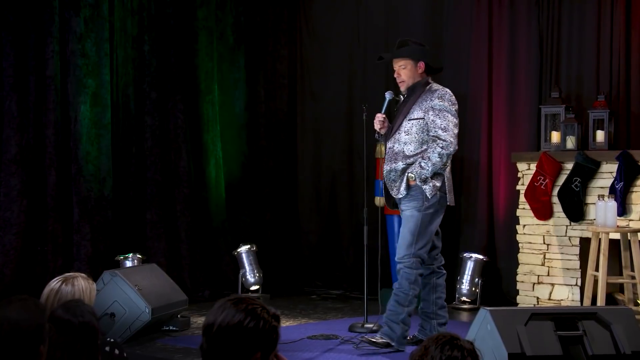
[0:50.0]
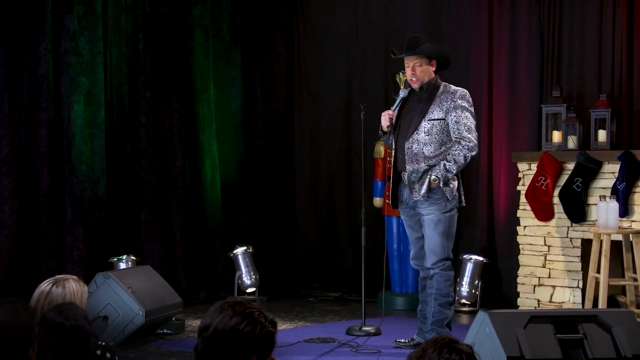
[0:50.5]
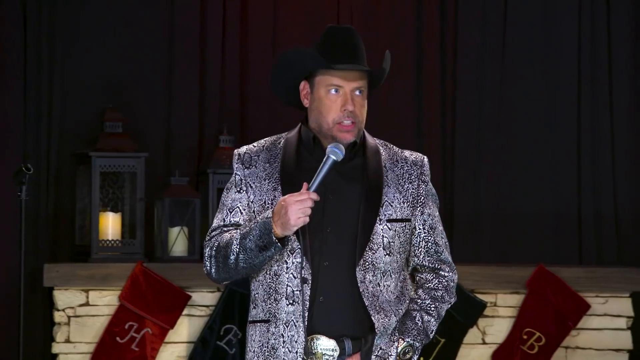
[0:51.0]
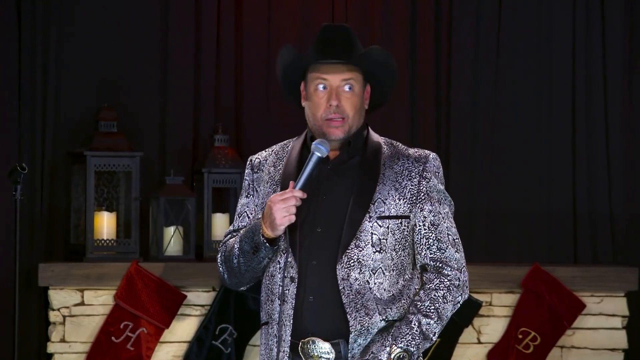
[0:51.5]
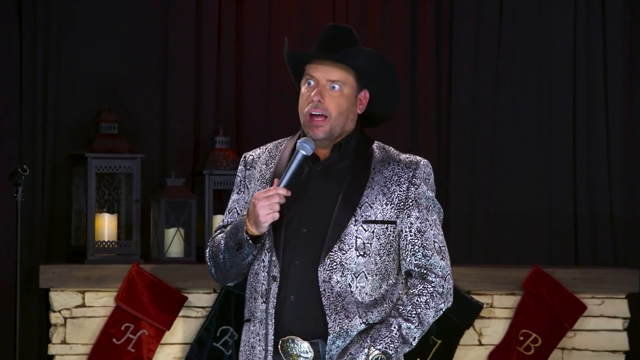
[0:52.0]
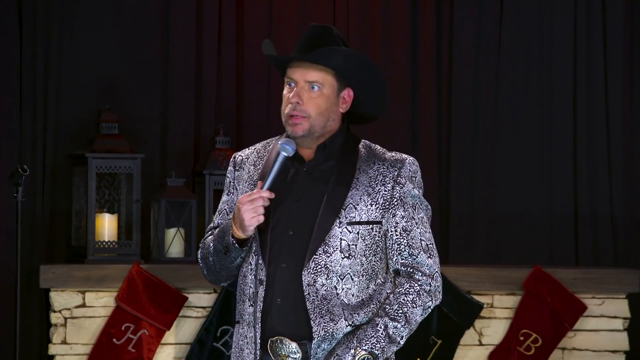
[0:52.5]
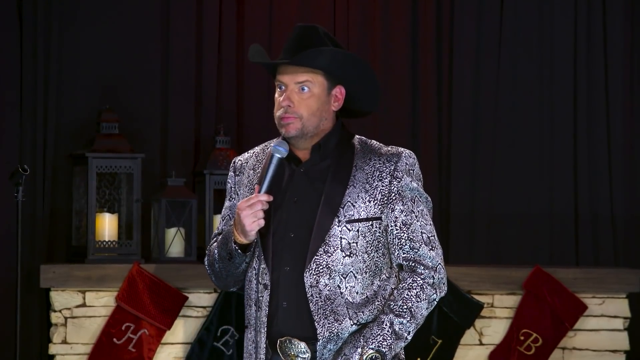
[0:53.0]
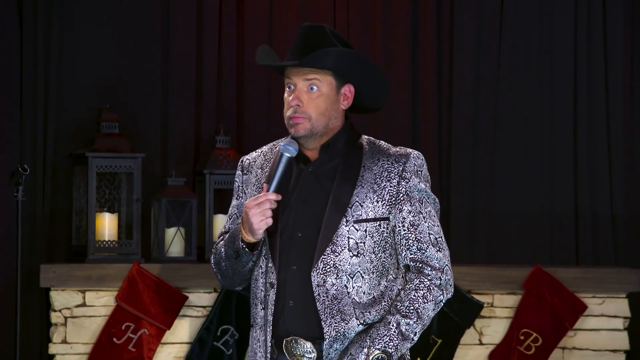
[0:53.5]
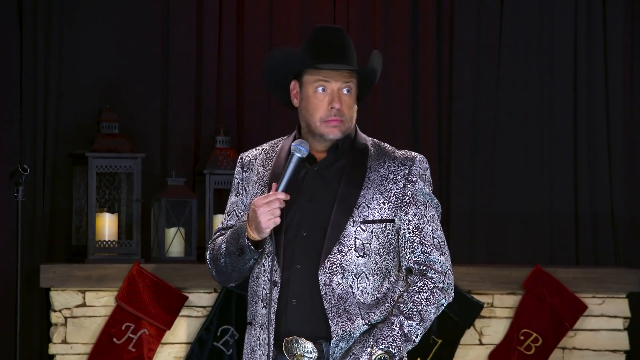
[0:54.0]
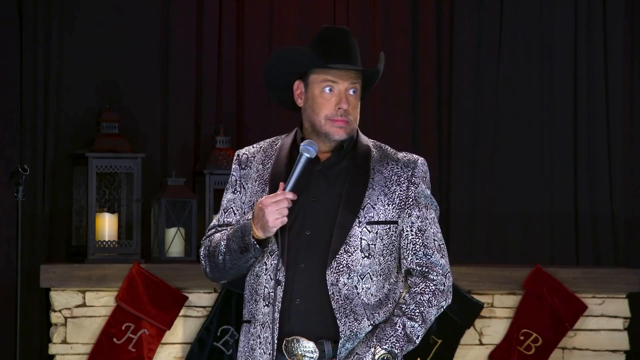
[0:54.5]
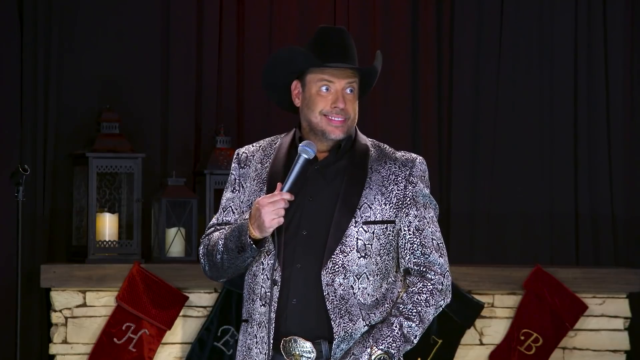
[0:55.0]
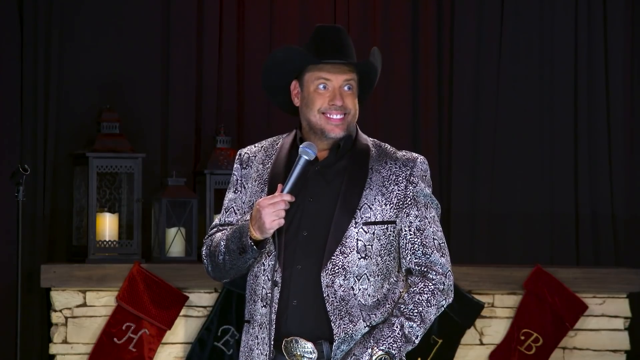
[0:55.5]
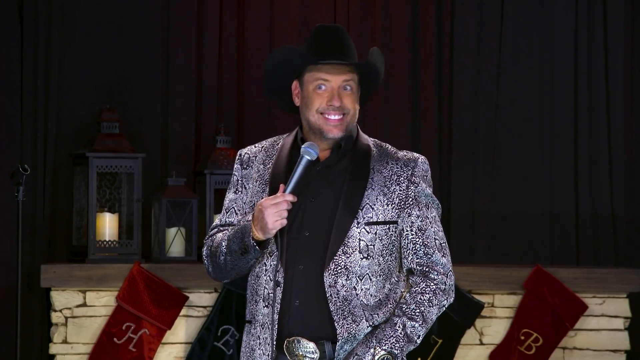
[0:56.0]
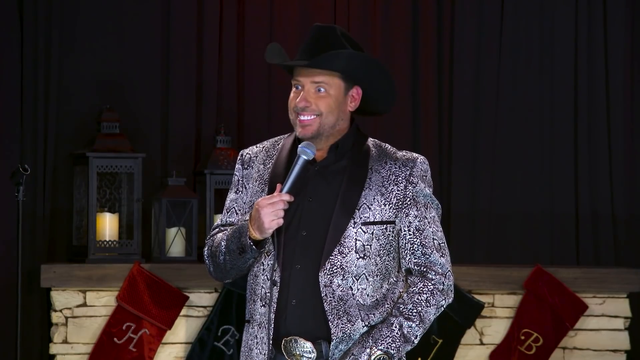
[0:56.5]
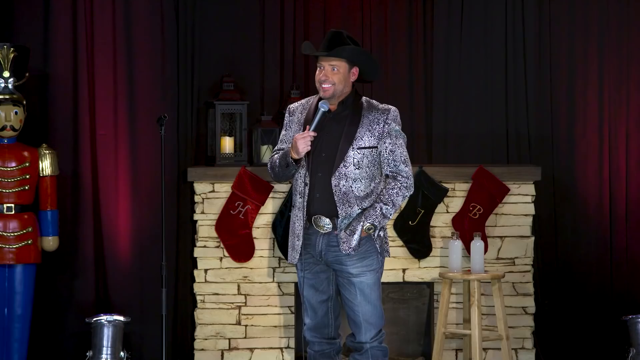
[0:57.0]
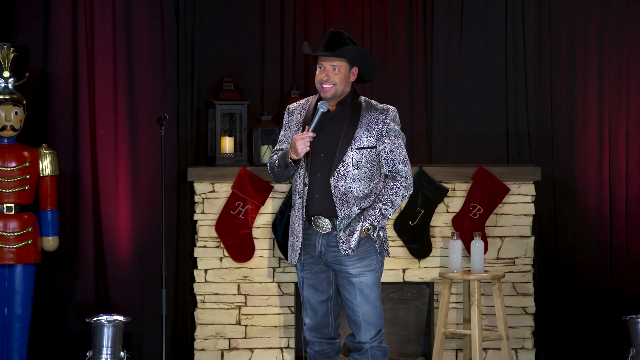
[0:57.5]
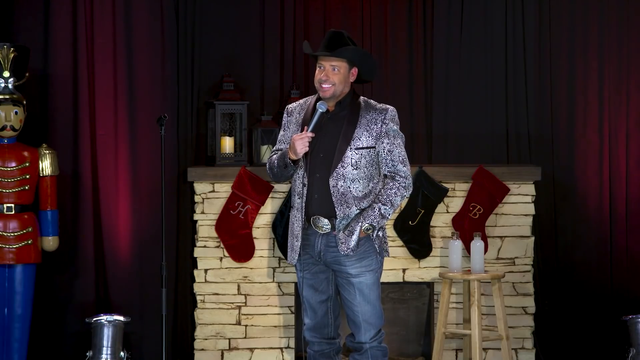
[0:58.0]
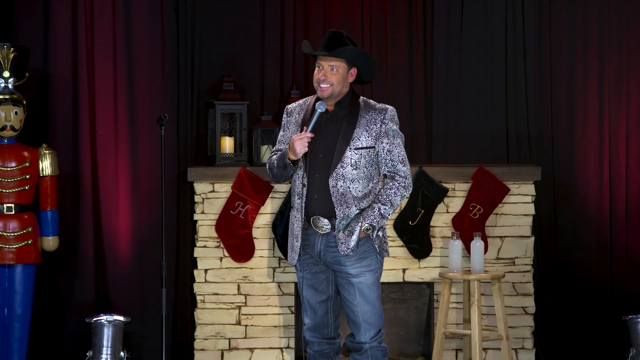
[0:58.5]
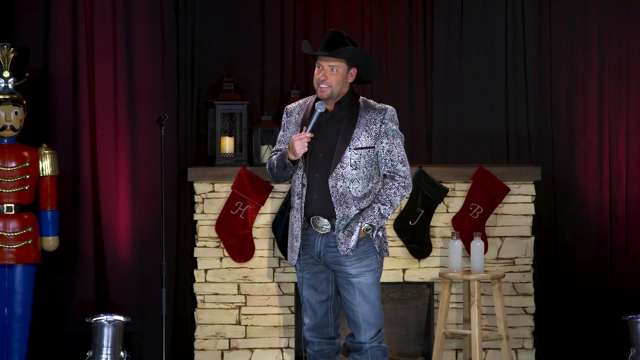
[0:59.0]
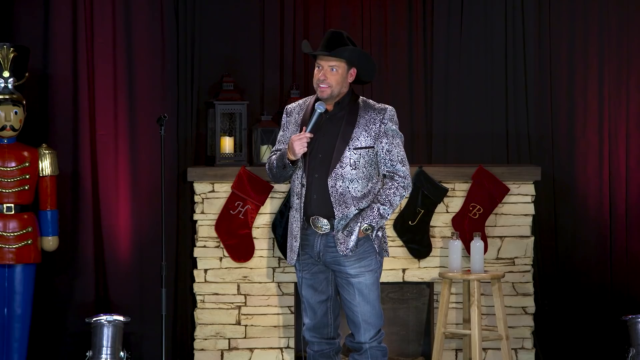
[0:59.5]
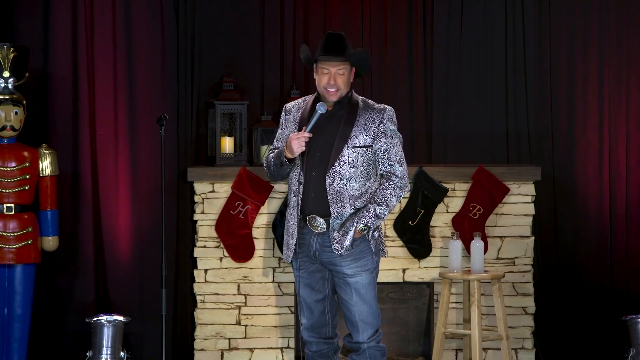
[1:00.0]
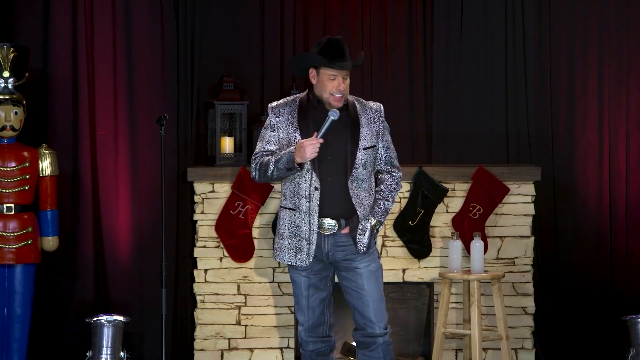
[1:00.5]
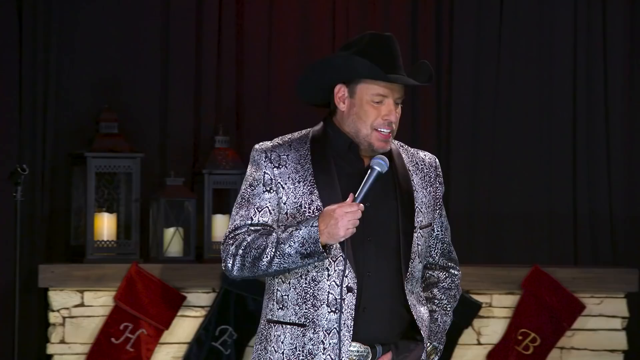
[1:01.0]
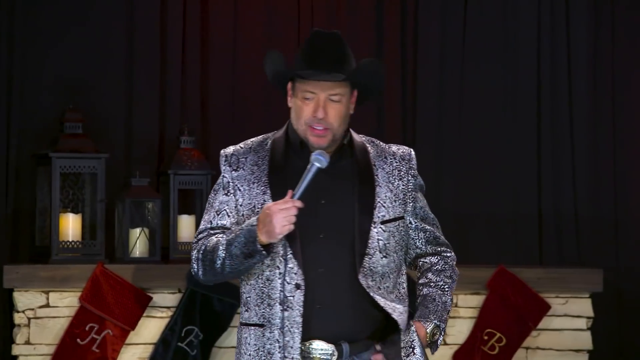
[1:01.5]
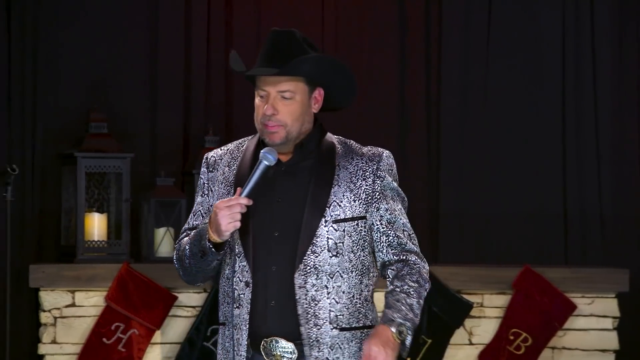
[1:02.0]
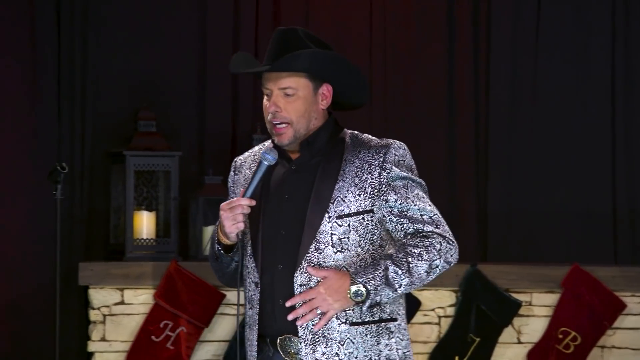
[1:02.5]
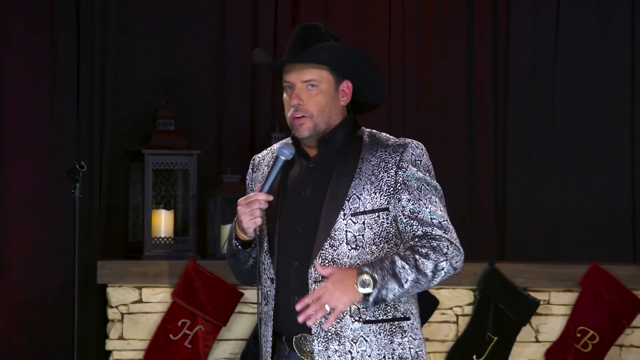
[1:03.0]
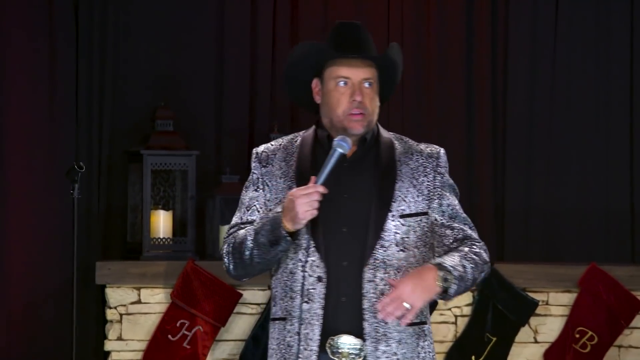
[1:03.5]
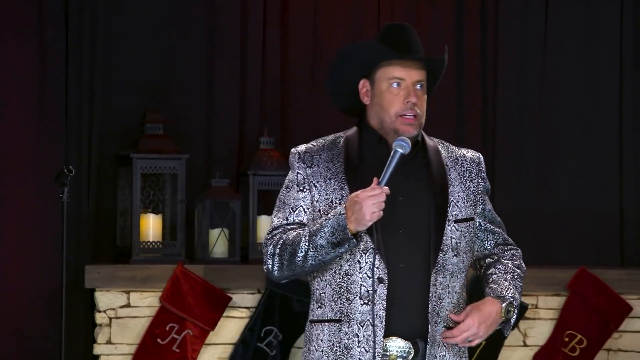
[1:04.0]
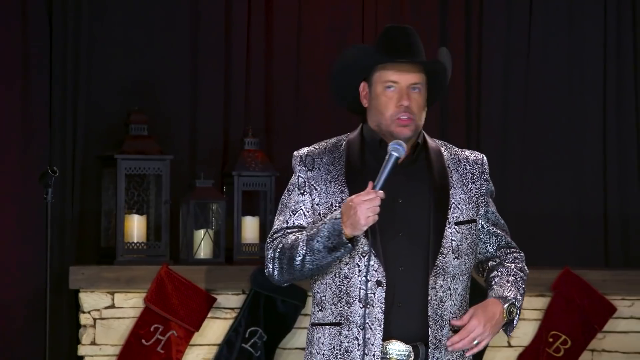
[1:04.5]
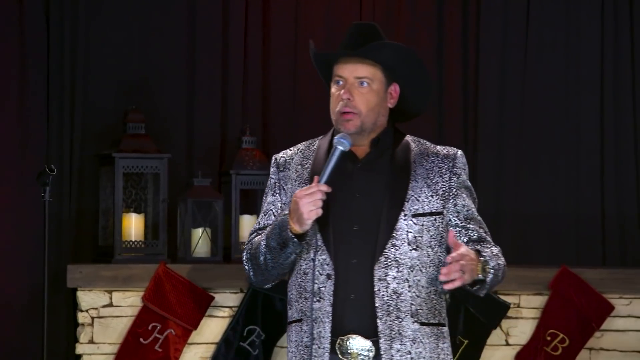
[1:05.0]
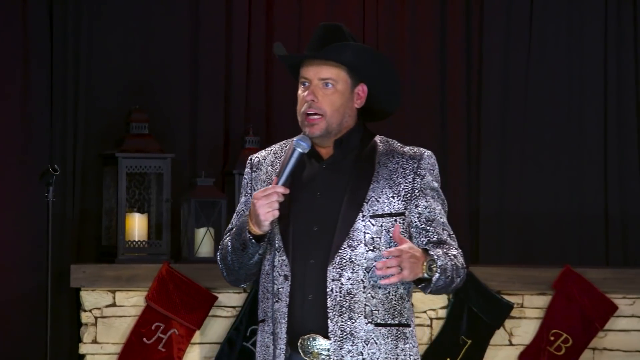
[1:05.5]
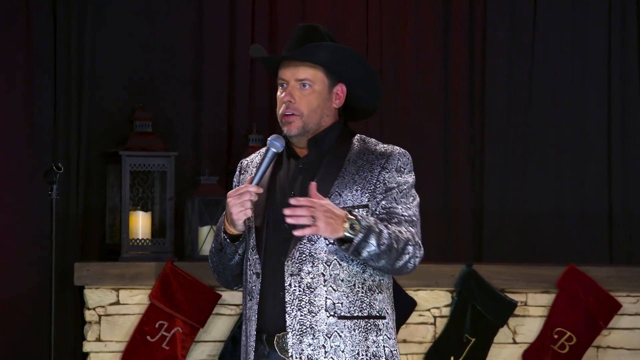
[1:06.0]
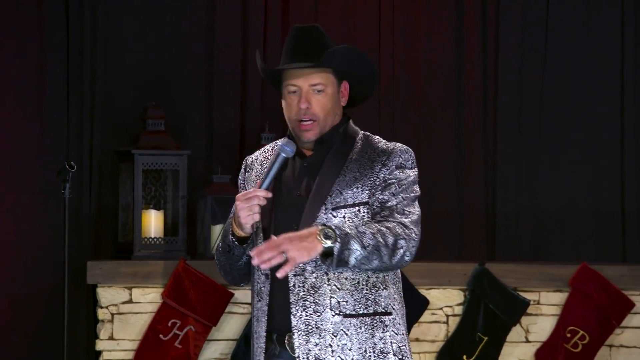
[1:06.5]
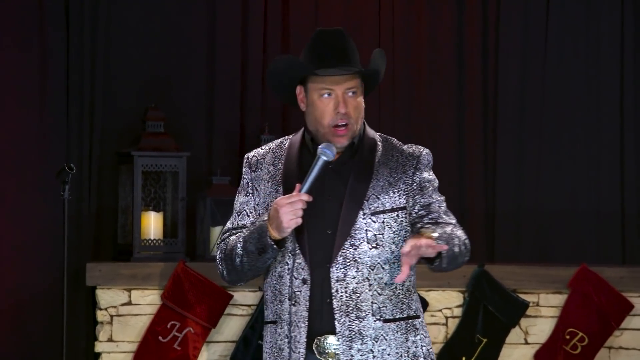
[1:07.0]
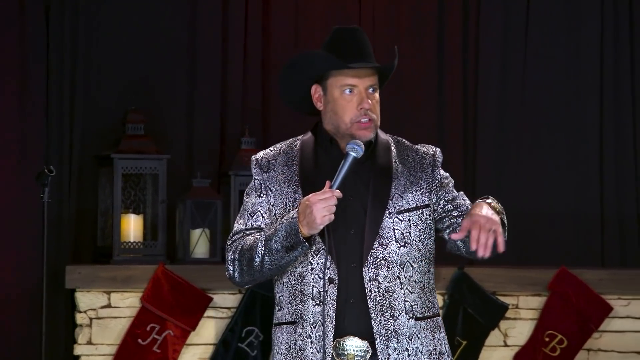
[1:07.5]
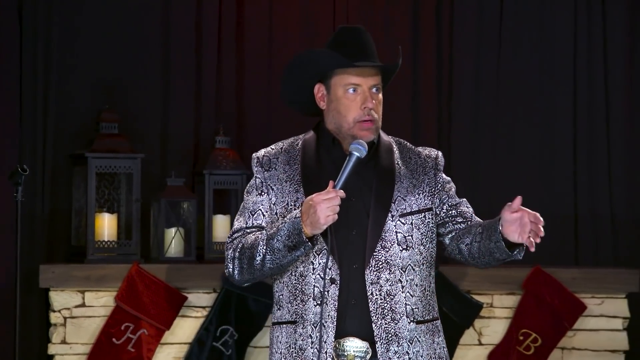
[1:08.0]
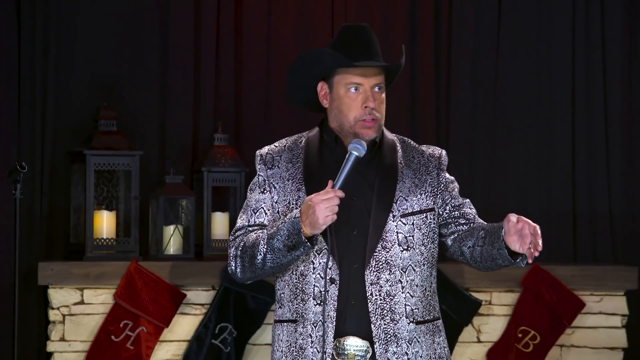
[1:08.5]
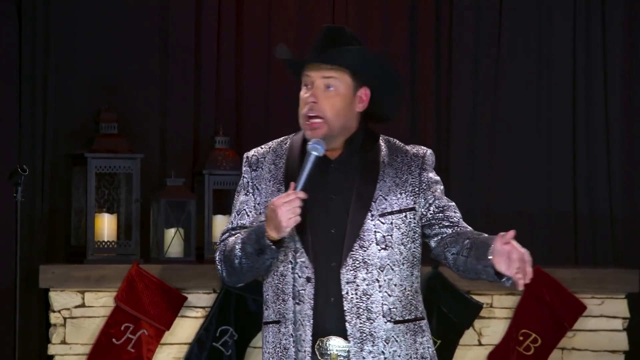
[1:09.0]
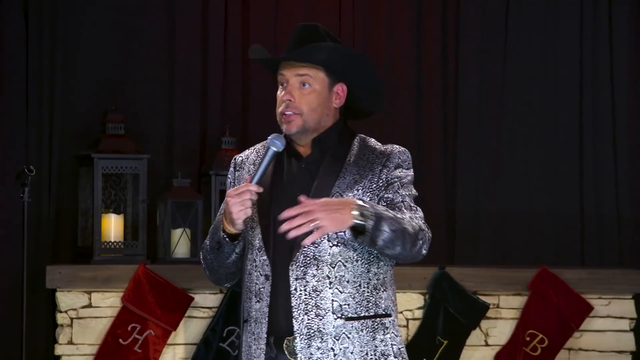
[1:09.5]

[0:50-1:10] The man continues to talk; he appears unsure at first, then appears more confident as his eyes move up and down. He is now by a wooden statue of a man holding an object in his left hand that appears to be a bell, followed by three cups of increasingly smaller size. The statue appears to wear a belt and to be made up of more cups of various sizes forming its legs, dress and top. It appears to wear a hat made of various shades and materials, and it appears happy and sad at the same time. The microphone next to the wall appears tall, and there is a wooden fireplace.